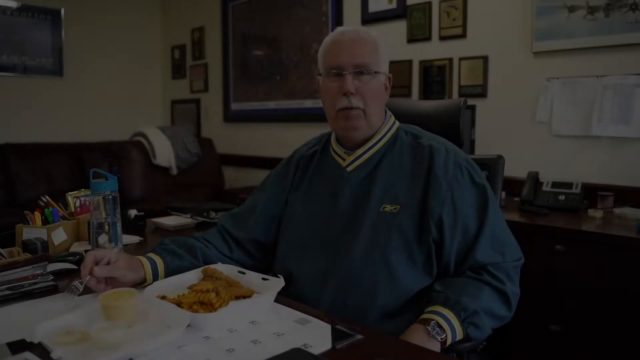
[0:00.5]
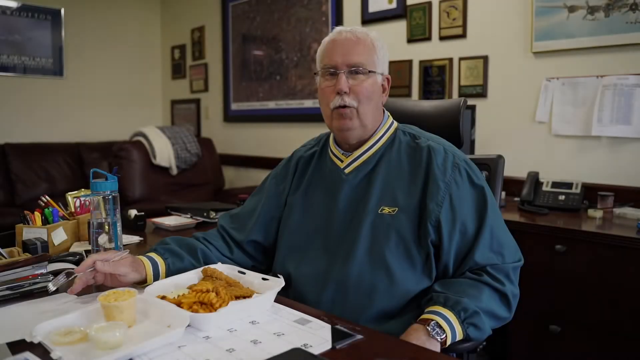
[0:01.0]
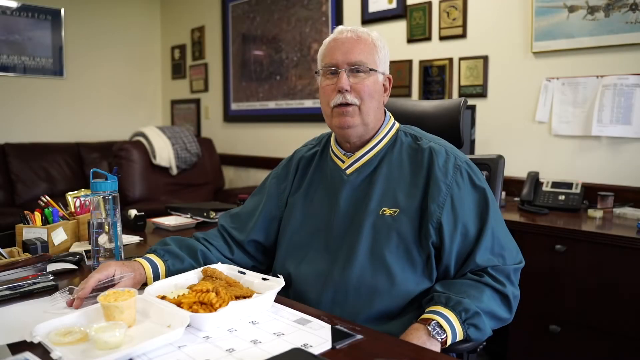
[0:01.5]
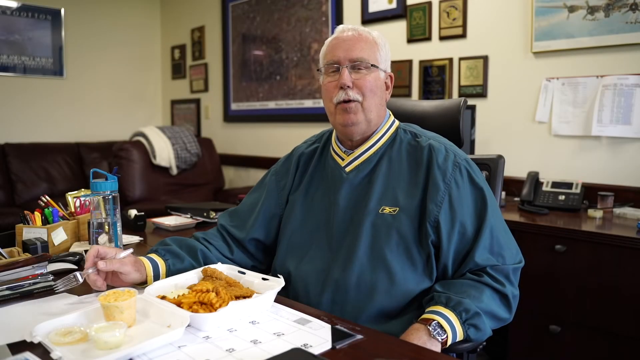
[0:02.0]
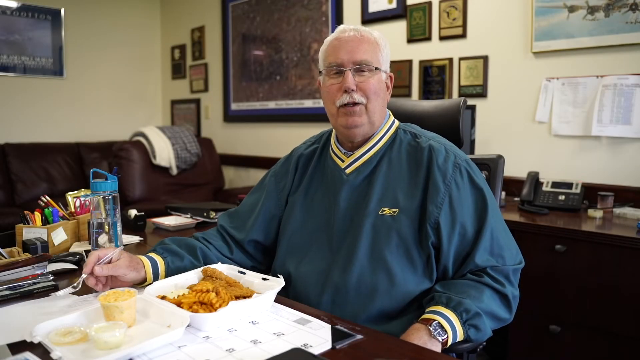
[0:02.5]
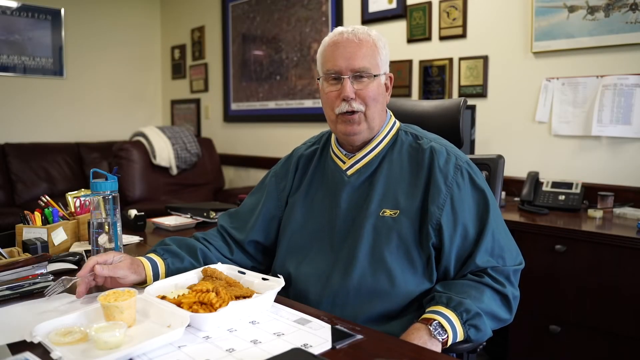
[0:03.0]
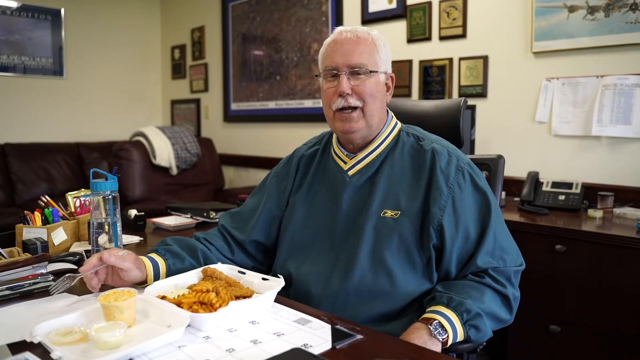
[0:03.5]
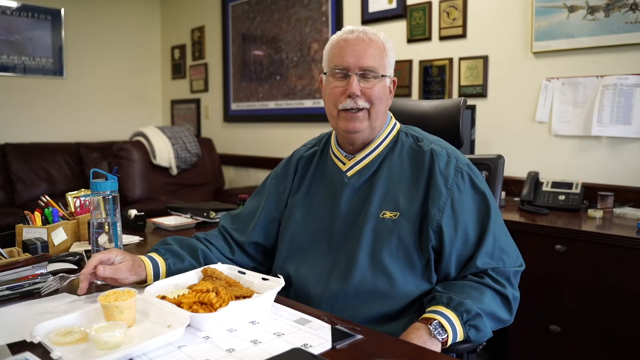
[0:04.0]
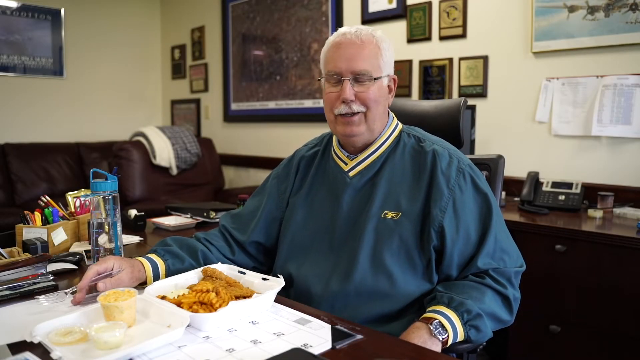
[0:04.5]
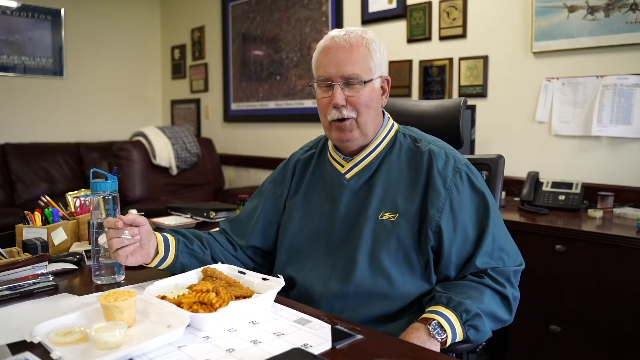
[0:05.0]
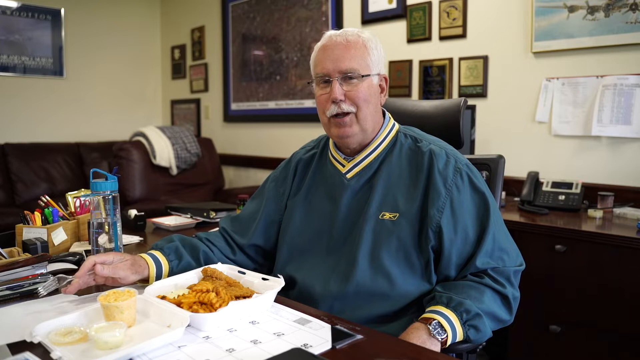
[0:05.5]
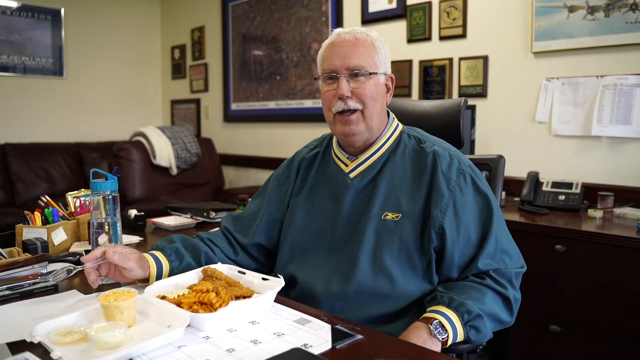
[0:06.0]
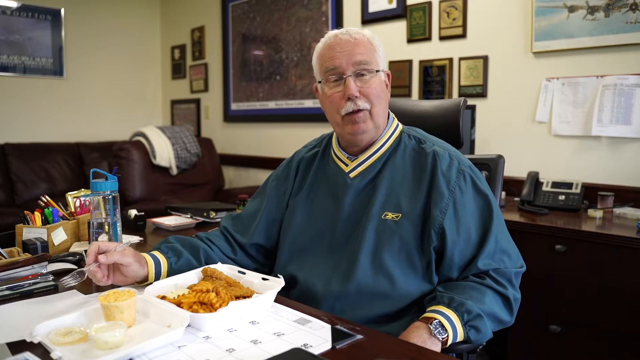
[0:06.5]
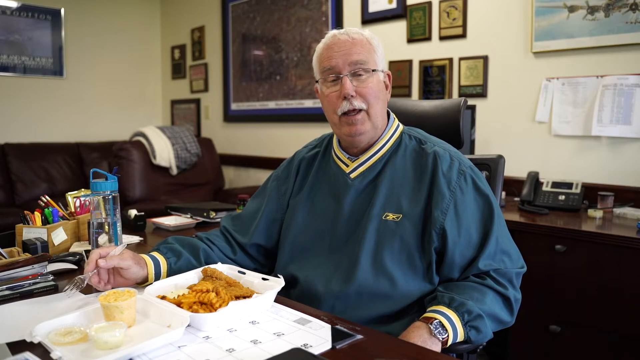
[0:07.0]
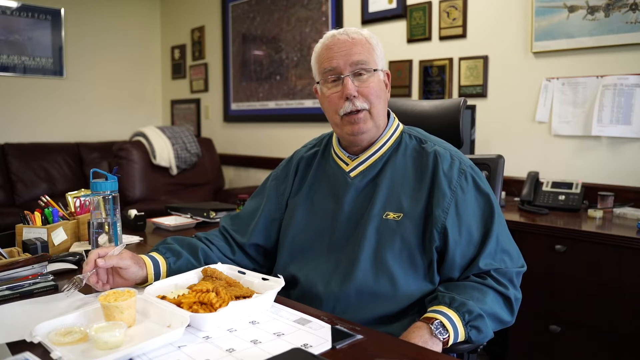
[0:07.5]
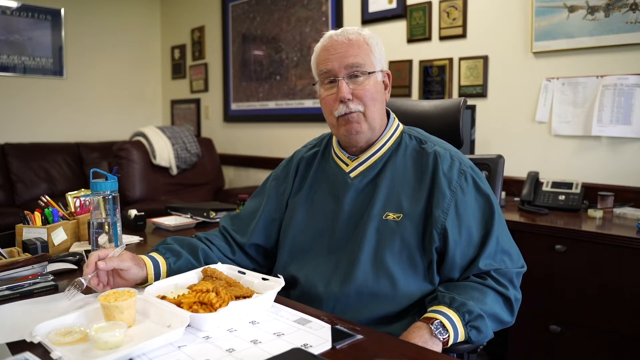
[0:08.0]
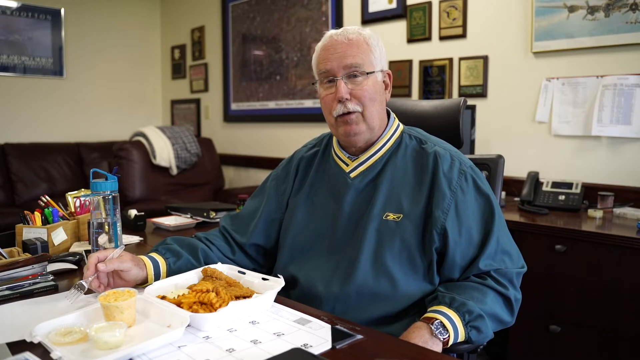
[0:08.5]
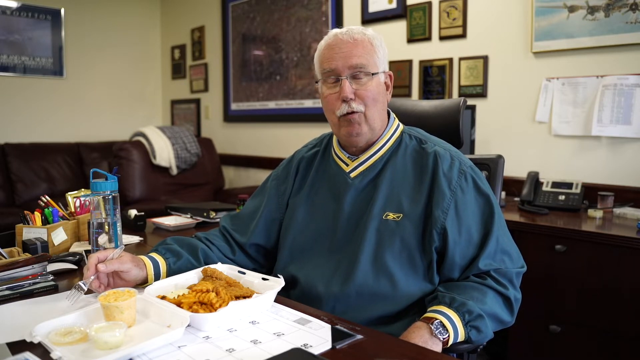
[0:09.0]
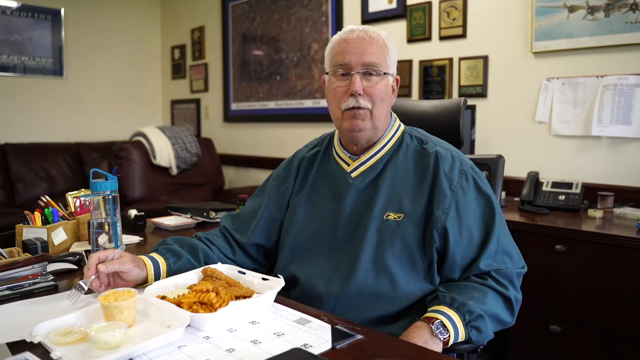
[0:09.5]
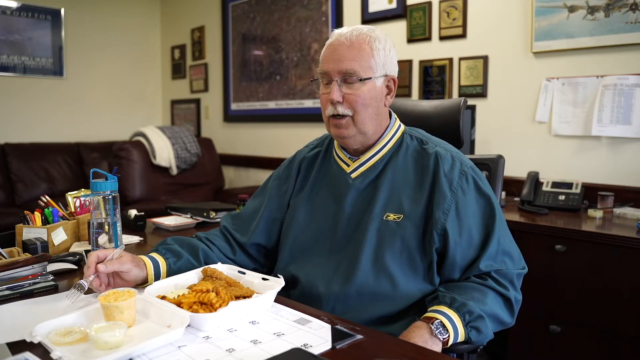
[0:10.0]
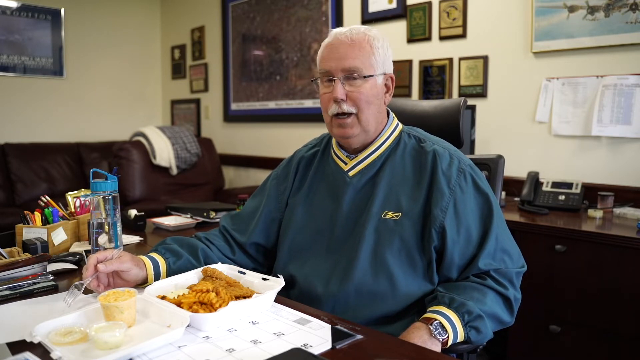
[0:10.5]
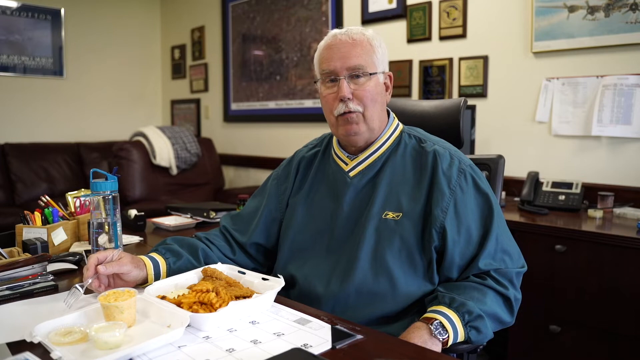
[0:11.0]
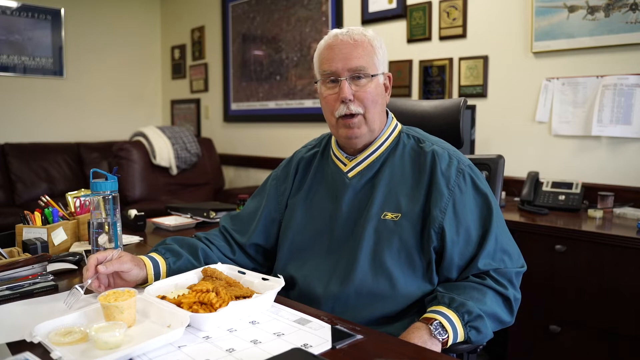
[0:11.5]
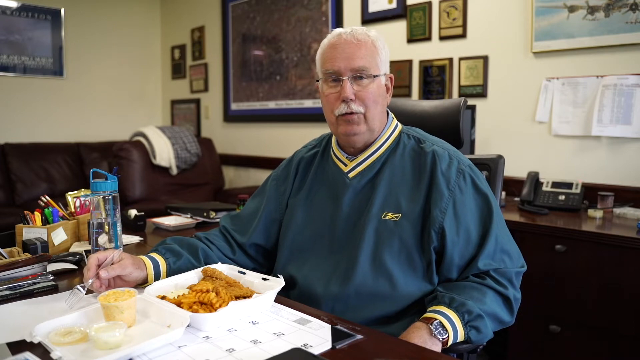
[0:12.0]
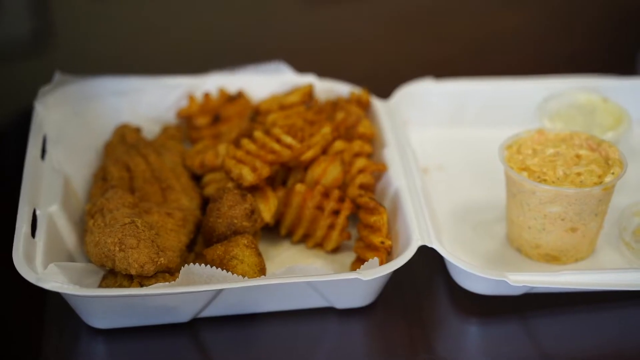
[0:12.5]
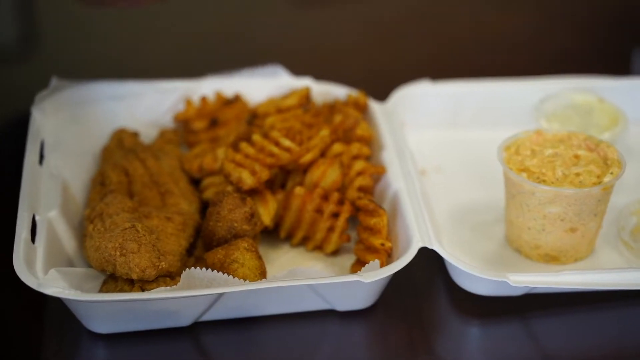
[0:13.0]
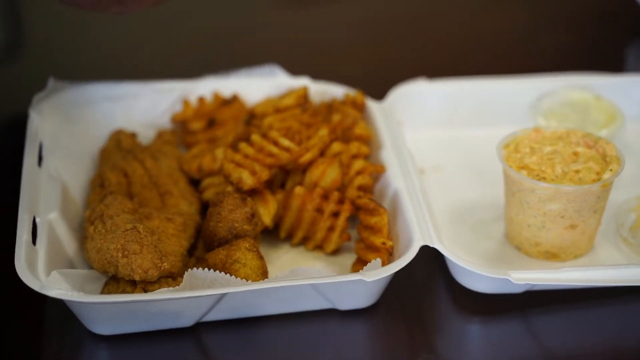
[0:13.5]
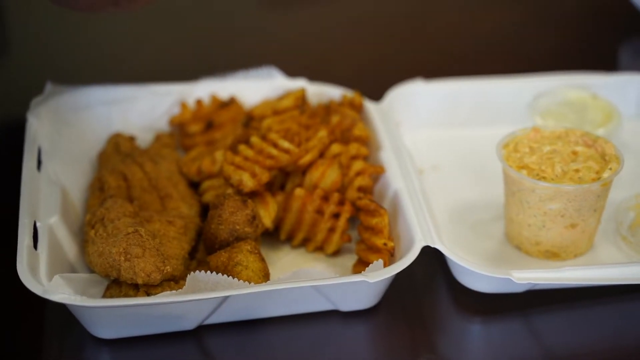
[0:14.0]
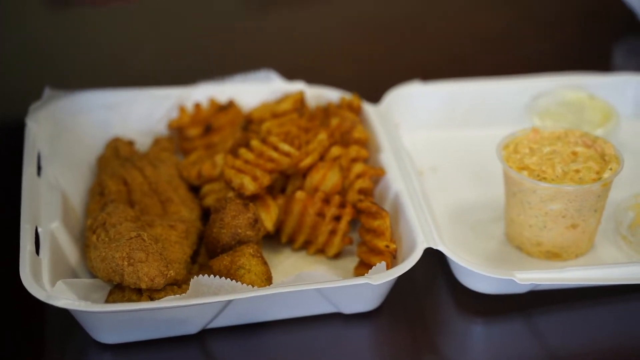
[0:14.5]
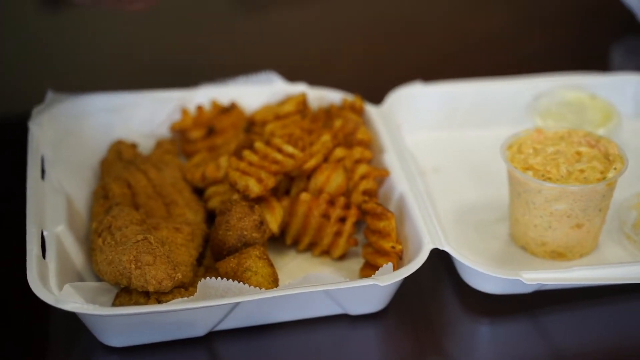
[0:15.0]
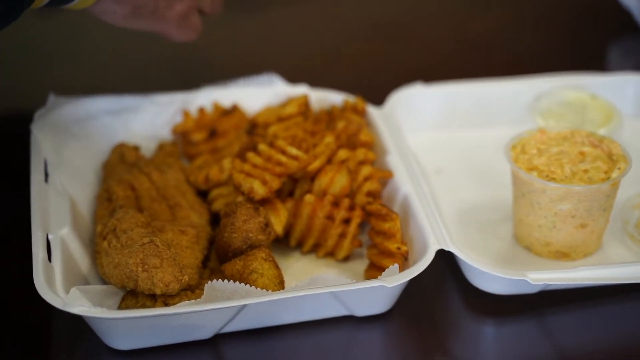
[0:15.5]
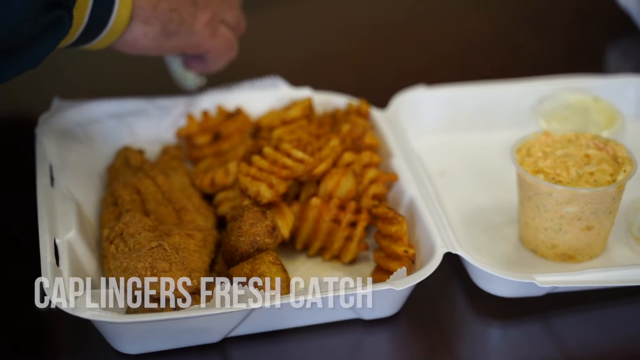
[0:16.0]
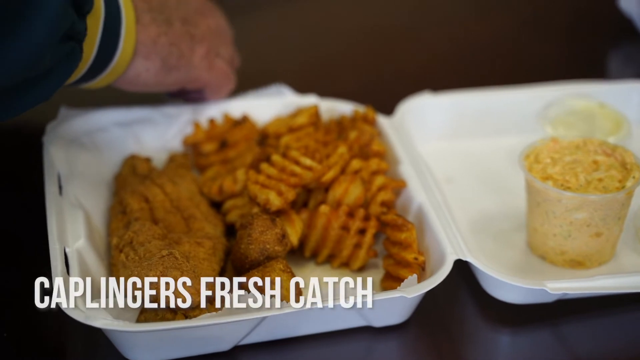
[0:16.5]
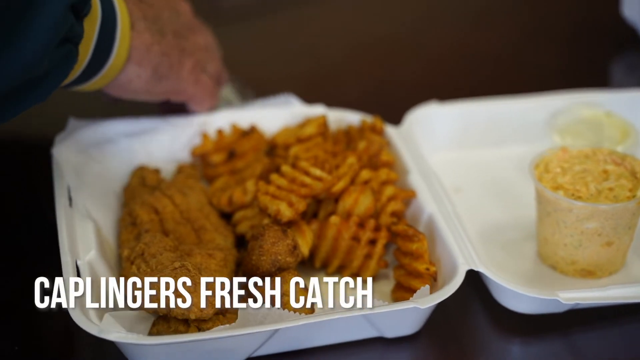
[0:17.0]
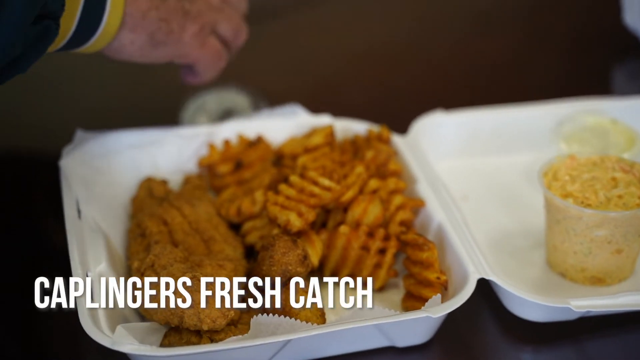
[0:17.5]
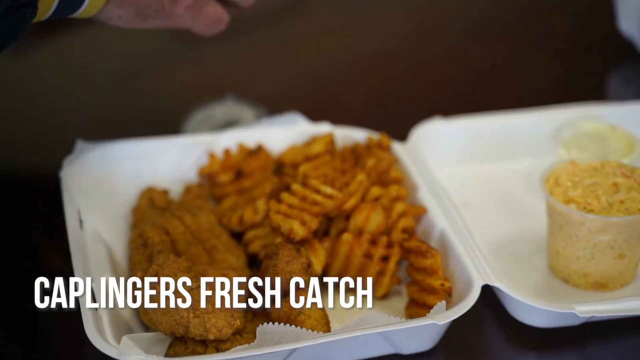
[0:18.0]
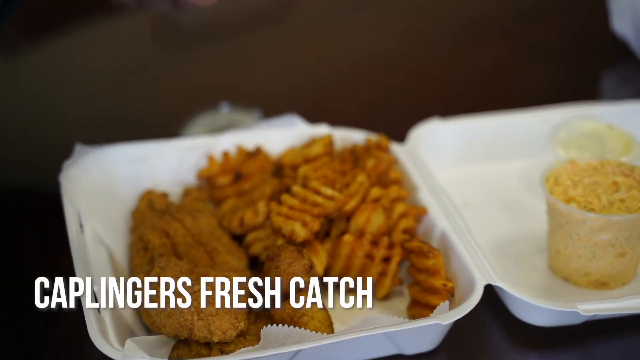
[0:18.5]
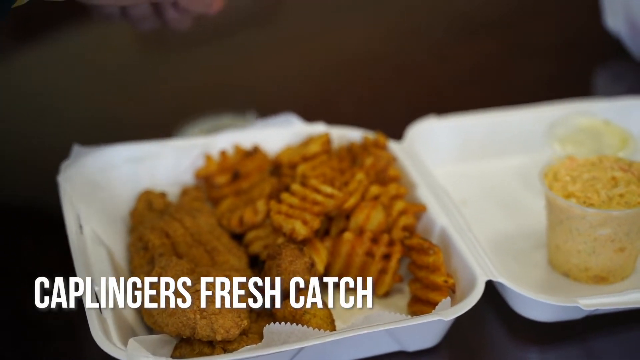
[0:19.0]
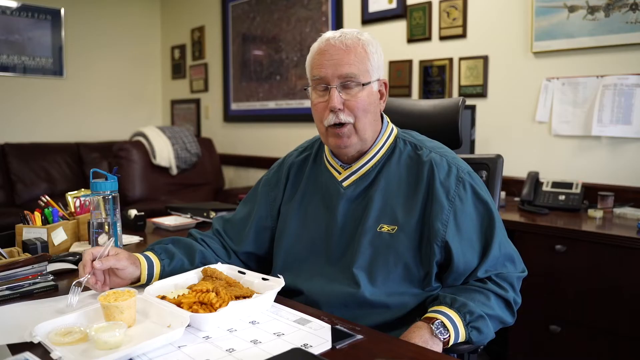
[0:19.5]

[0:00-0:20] A man with white hair and glasses wears a dark blue Reebok sweater with yellow stripes and a blue stripe at the ends of the sleeves and at the collar. He is sitting in an office, with plaques behind him, his phone visible, and what looks like a leather couch to the side. He has a styrofoam takeout box and a fork, and it looks like he is about to eat the food or review it. A close-up shows the food, which is from Kaplinger's Fresh Catch: some kind of fried fish, what look like waffle fries, and a side that looks like some kind of pasta salad, all in the styrofoam container. In the close-up the waffle fries look seasoned and are kind of orange.